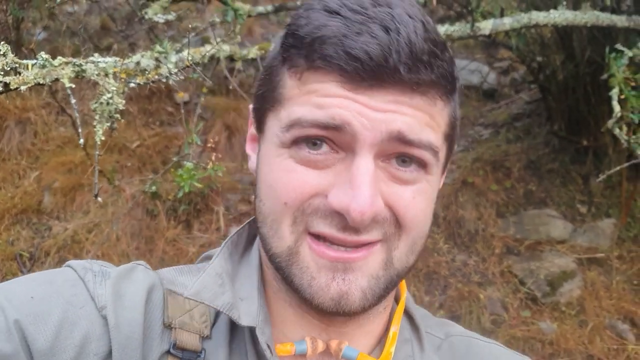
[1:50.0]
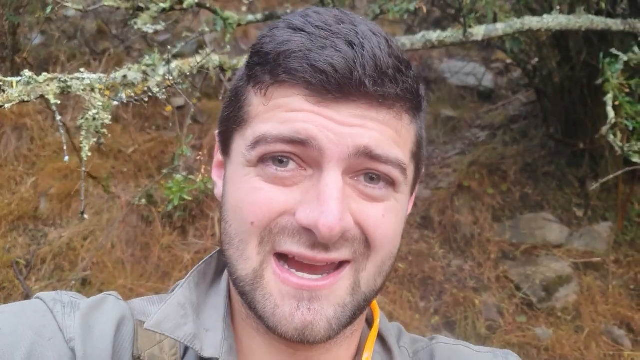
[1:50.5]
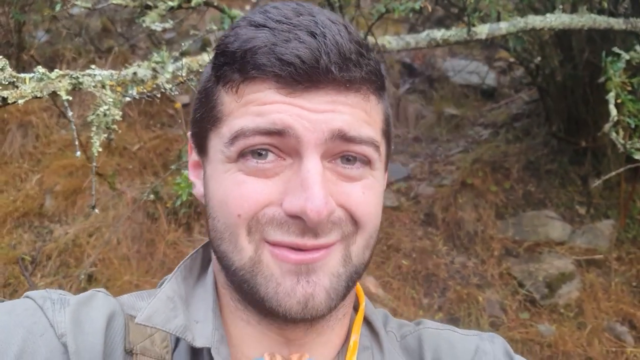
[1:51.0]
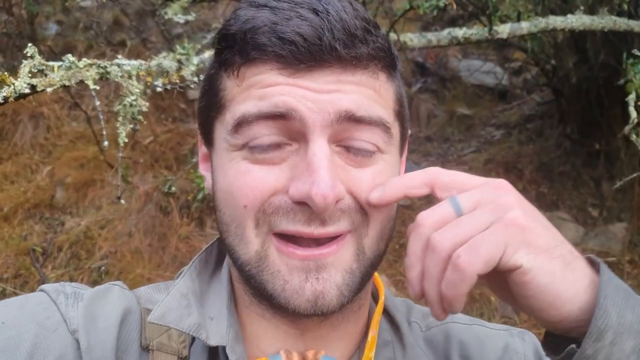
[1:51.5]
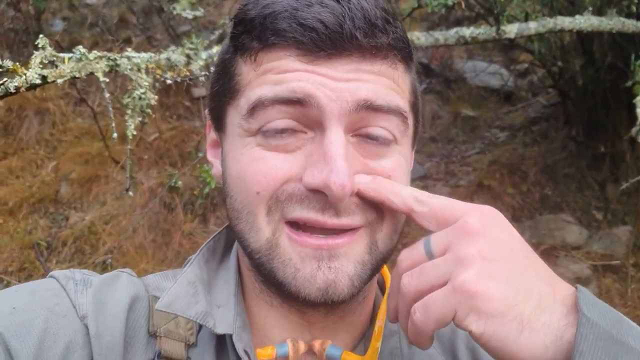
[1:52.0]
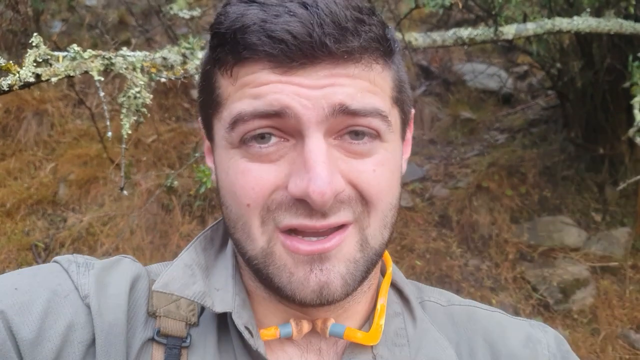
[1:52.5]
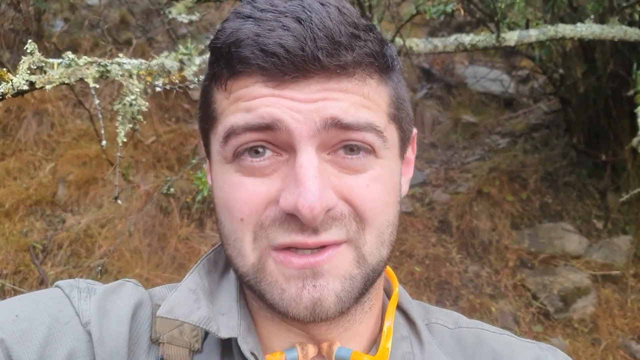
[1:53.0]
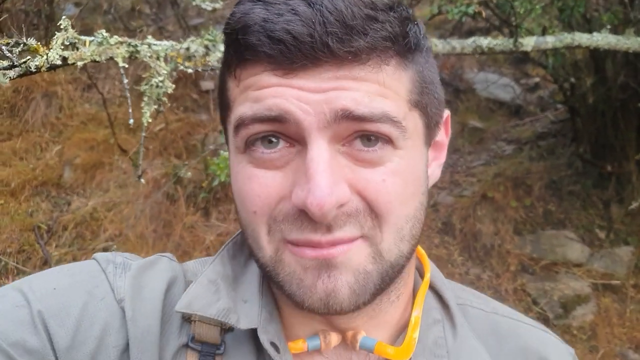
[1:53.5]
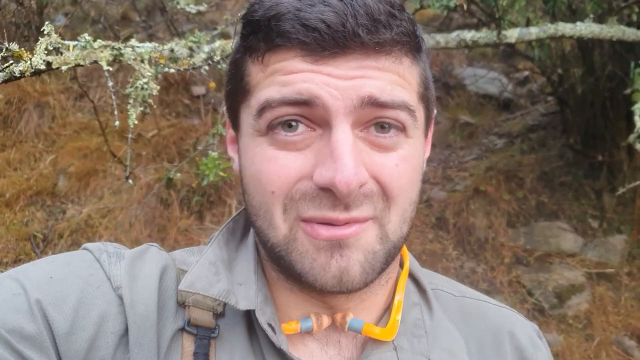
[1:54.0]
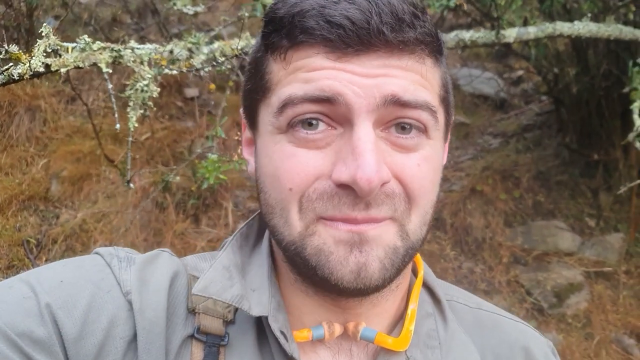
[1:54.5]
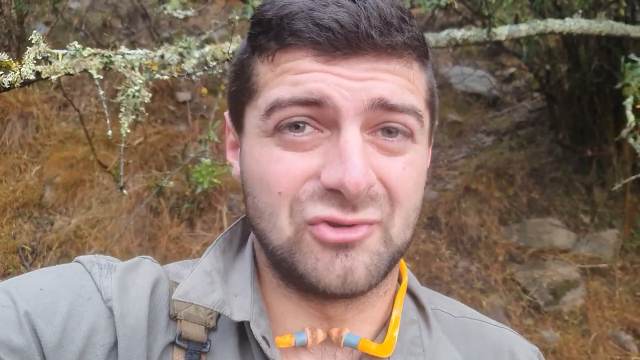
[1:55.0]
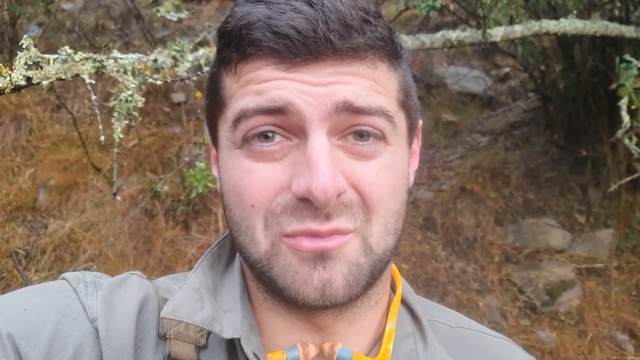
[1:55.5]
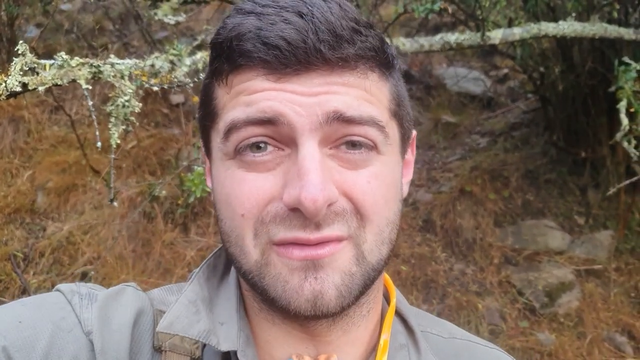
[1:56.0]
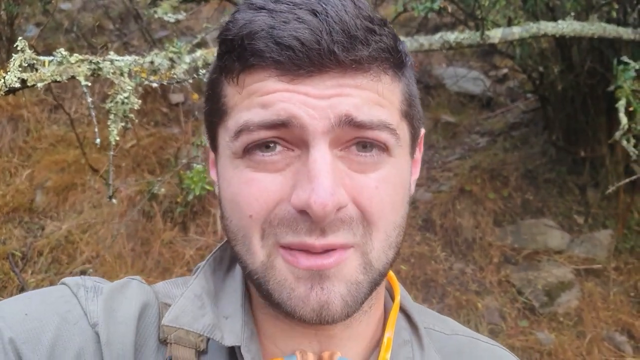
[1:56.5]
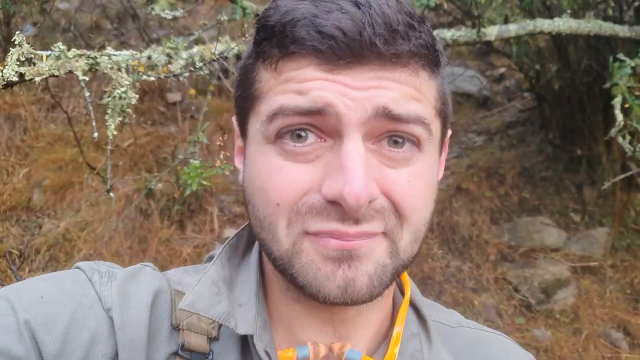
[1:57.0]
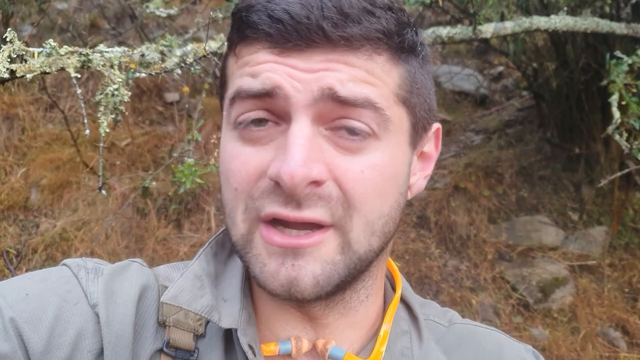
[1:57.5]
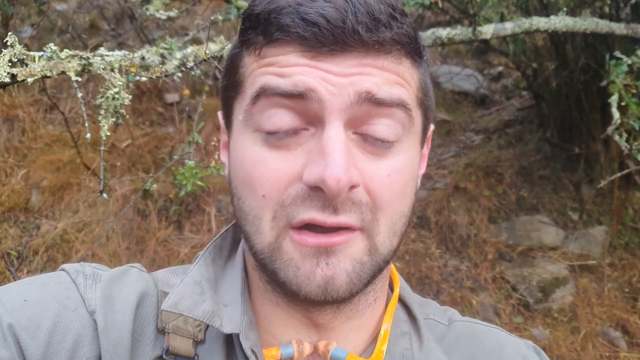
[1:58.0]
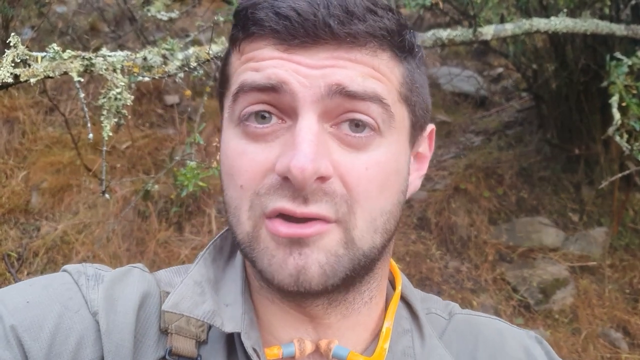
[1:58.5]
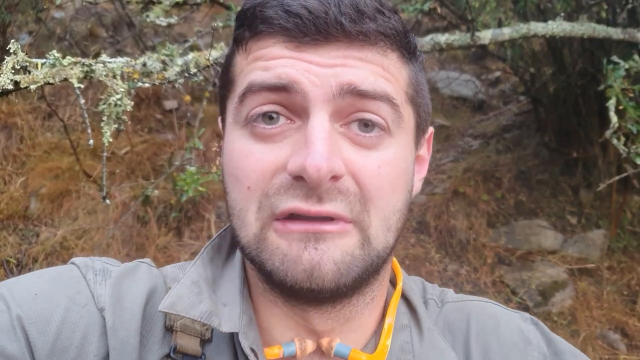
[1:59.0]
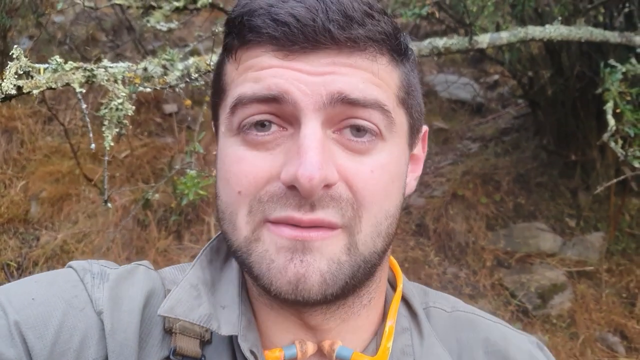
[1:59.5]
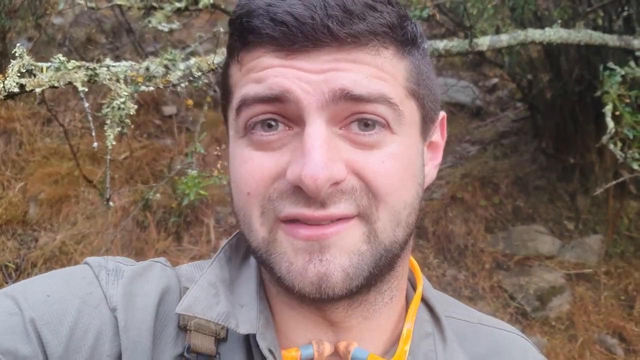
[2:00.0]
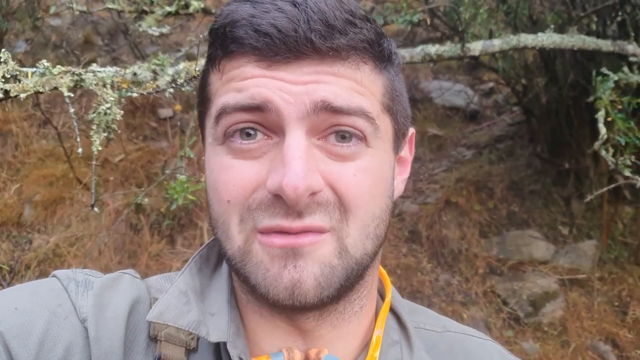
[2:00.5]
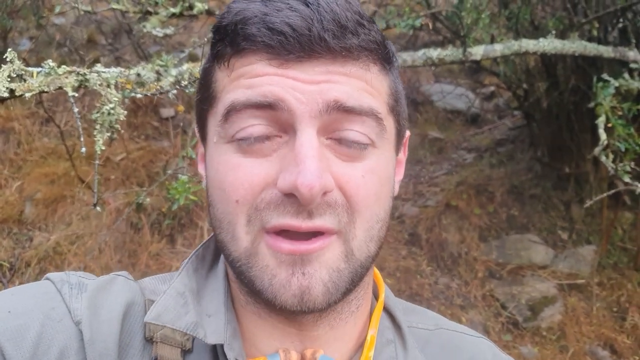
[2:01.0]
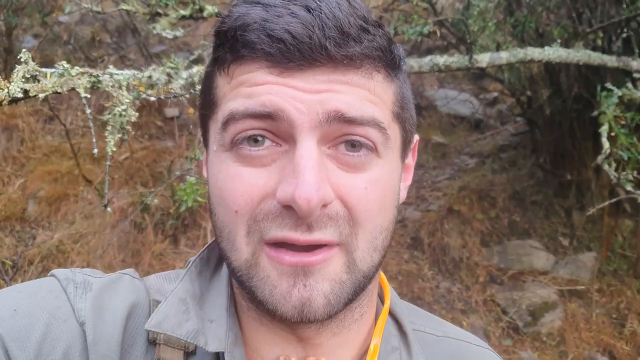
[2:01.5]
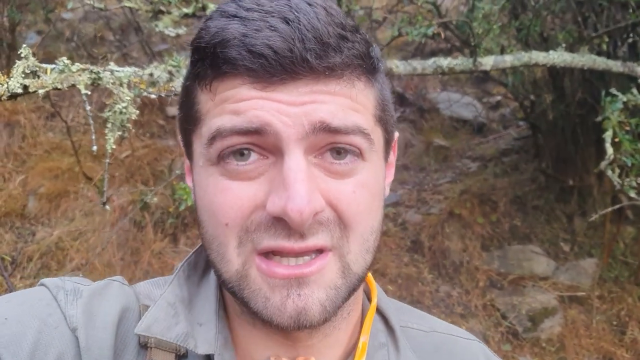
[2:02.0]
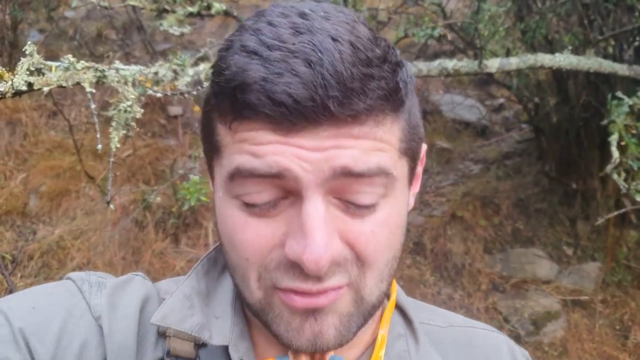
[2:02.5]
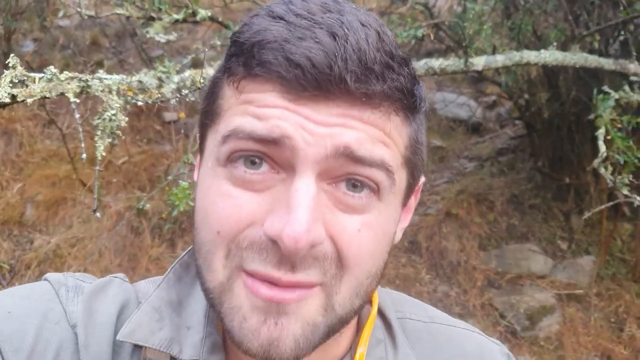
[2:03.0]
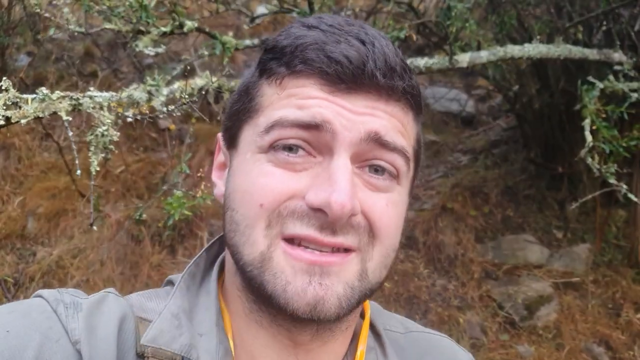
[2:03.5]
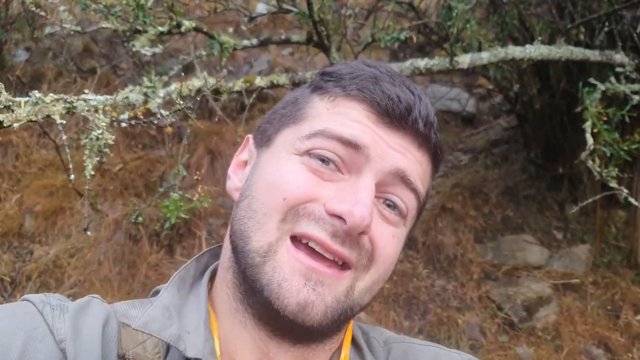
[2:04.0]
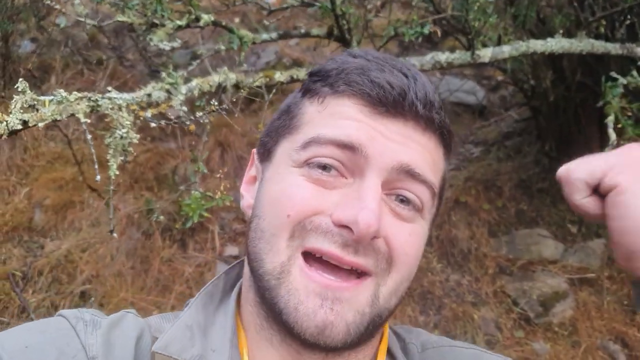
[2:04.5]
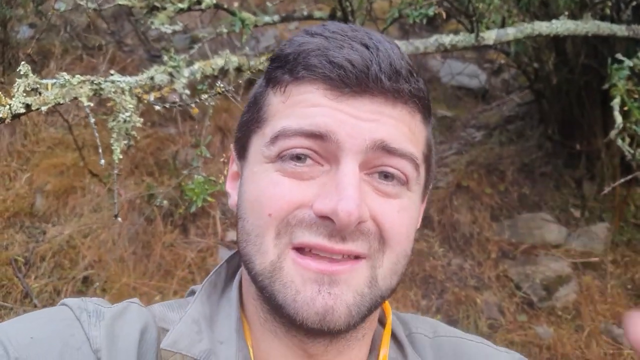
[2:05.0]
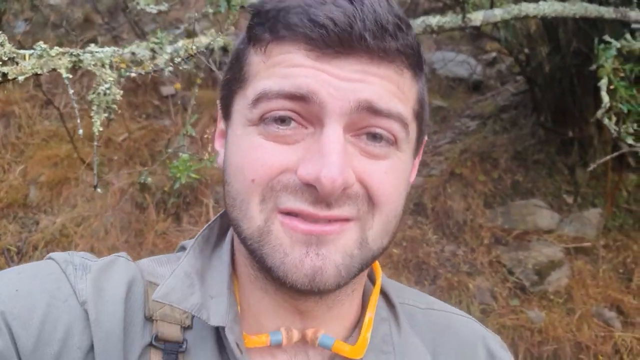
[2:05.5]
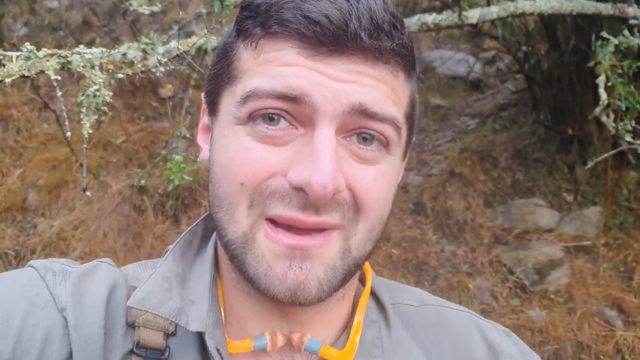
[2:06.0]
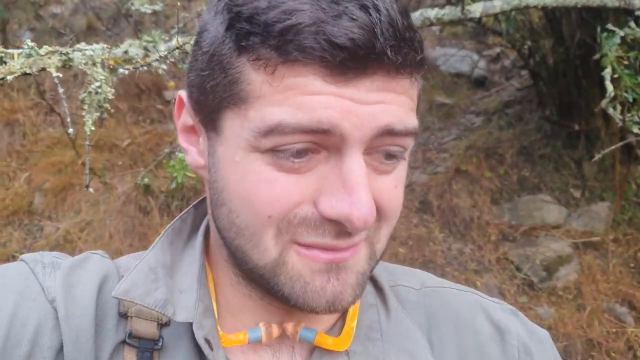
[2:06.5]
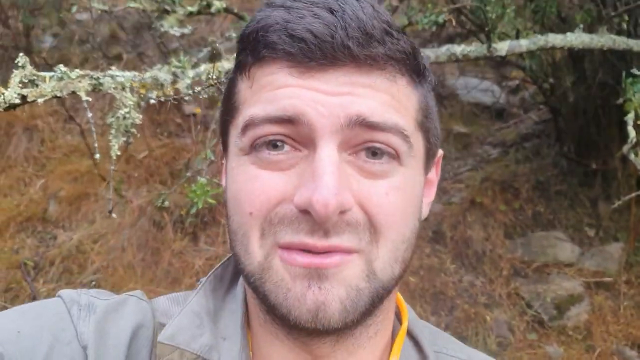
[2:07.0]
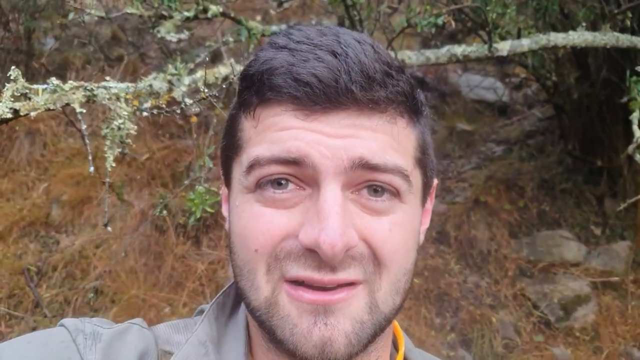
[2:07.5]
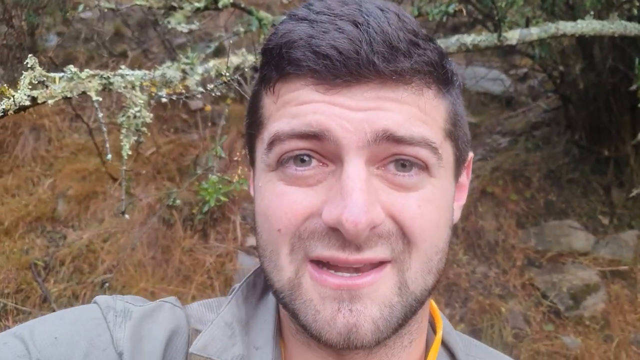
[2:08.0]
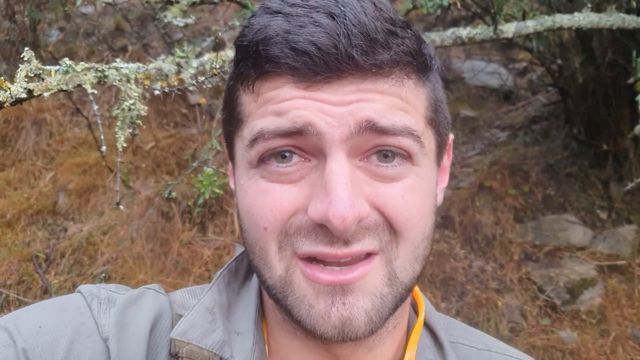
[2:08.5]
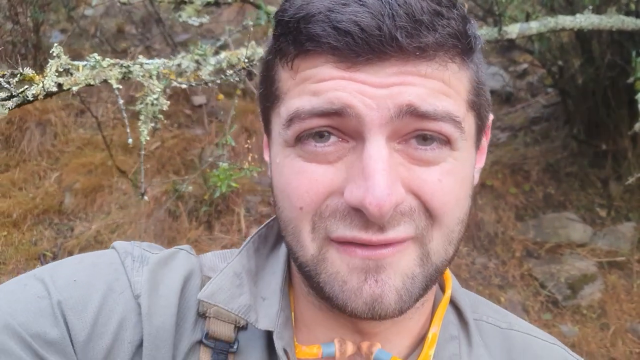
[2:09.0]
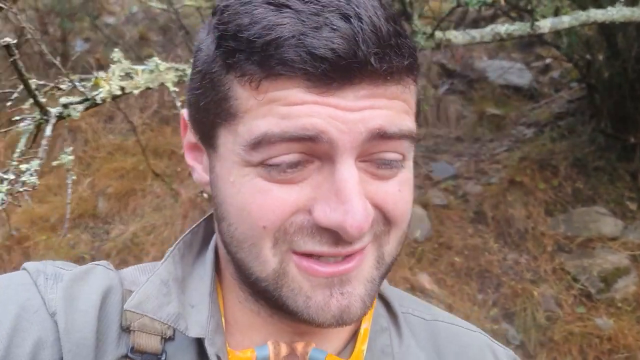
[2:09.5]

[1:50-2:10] The man continues talking to the camera. He wears a pale green shirt with a bag strap over his right shoulder, has short brown hair, and his brow is a little furrowed. He has a yellow plastic headpiece with what looks like ear defenders at each end. He is stood against a backdrop of trees and shrubs with some small rocks behind him. He scratches his nose as he talks and shakes his head slightly from side to side. At one point he looks slightly upset and shakes his head again. He has a slightly stubbly beard and moustache. It appears quite cold, as his breath seems to be visible in the air when he breathes out. He brings up his left hand with his thumb pointing off behind him, then moves and steps slightly across.